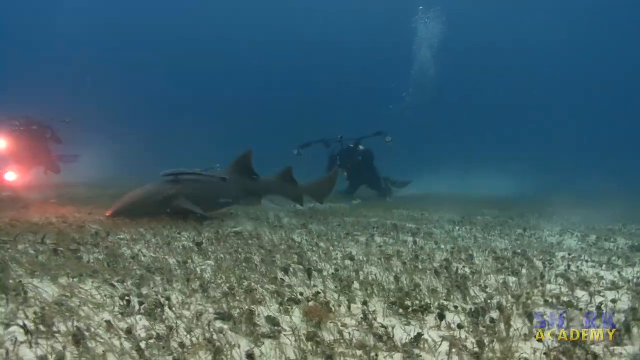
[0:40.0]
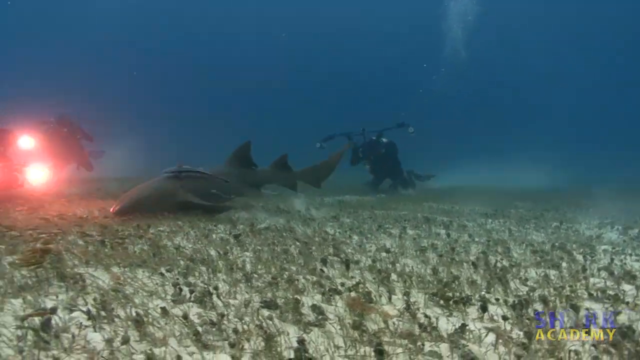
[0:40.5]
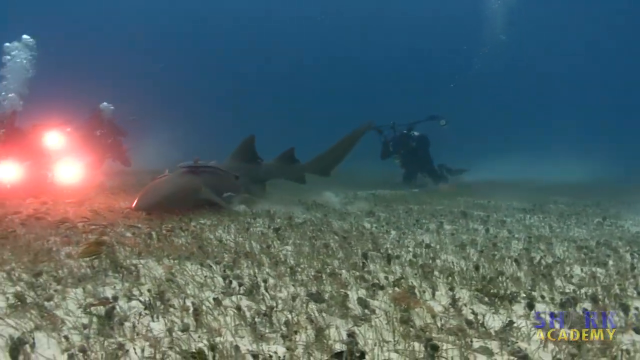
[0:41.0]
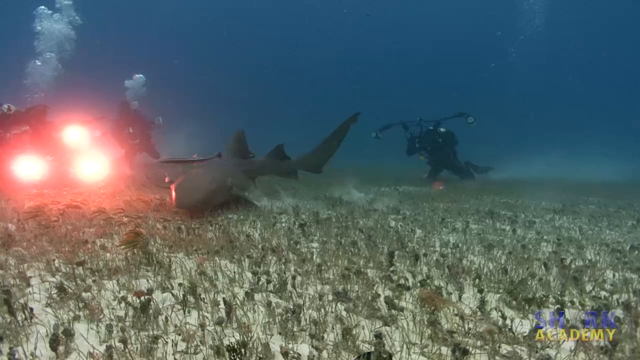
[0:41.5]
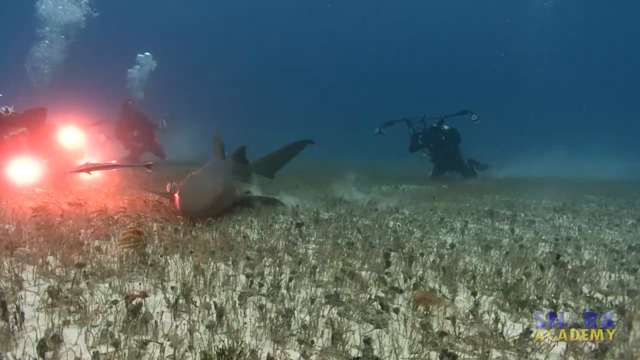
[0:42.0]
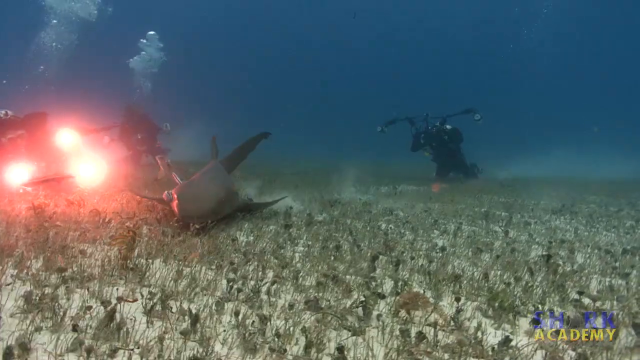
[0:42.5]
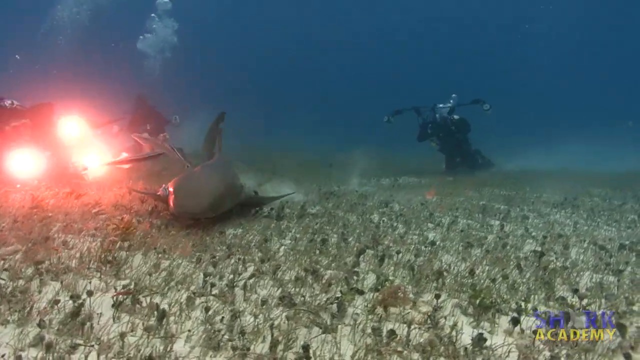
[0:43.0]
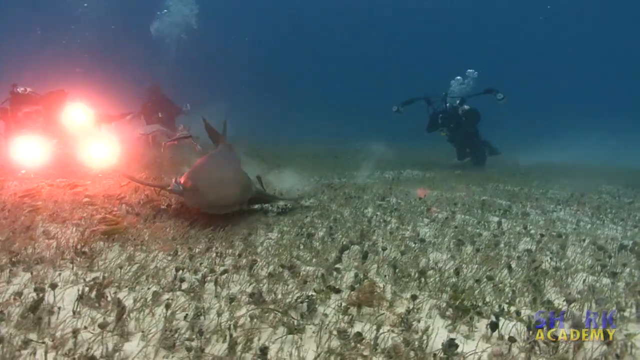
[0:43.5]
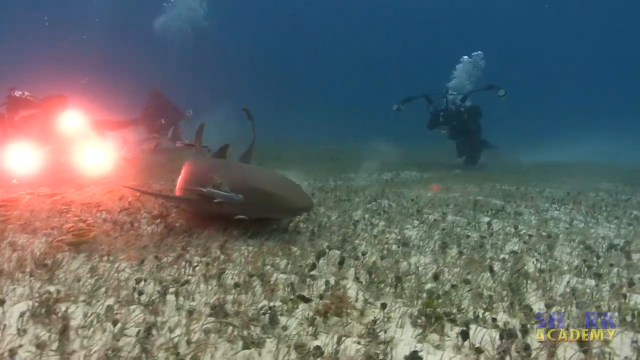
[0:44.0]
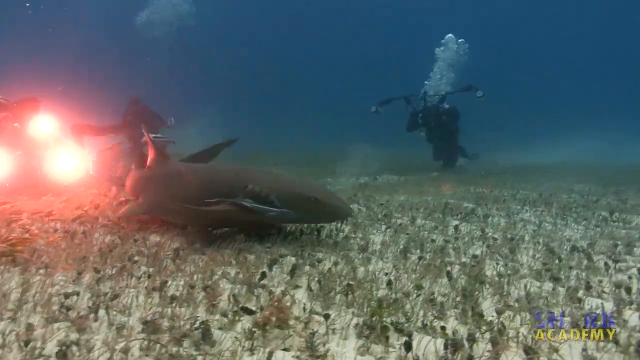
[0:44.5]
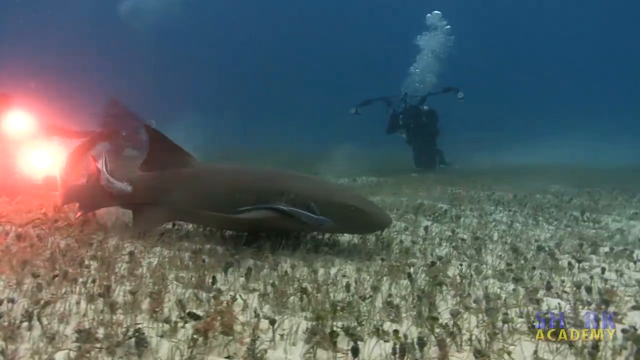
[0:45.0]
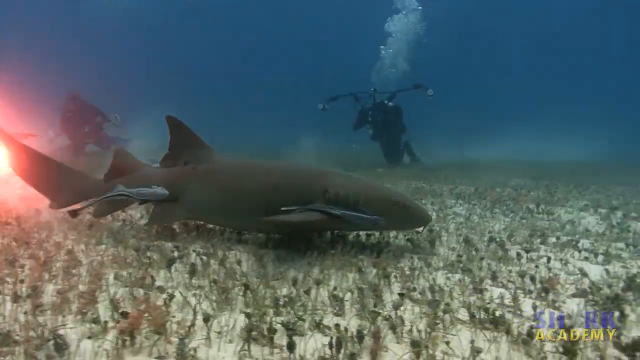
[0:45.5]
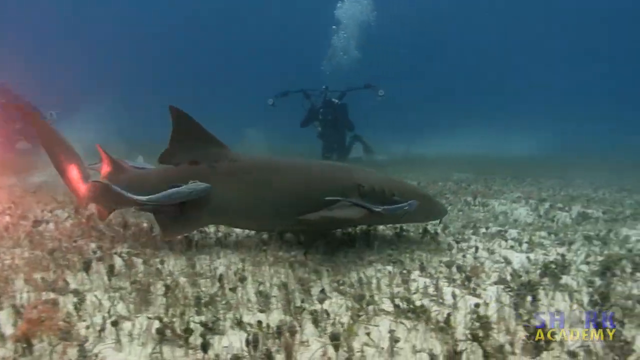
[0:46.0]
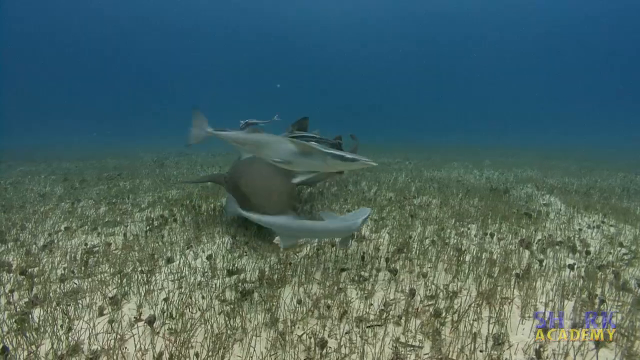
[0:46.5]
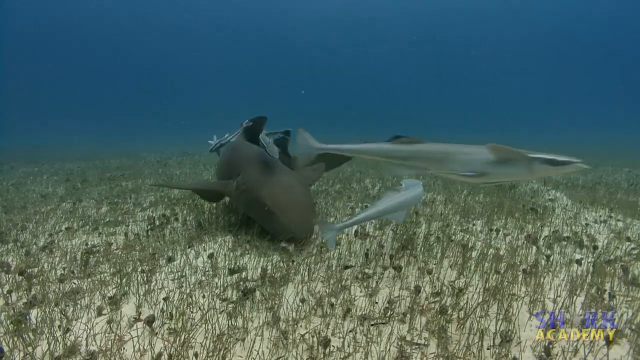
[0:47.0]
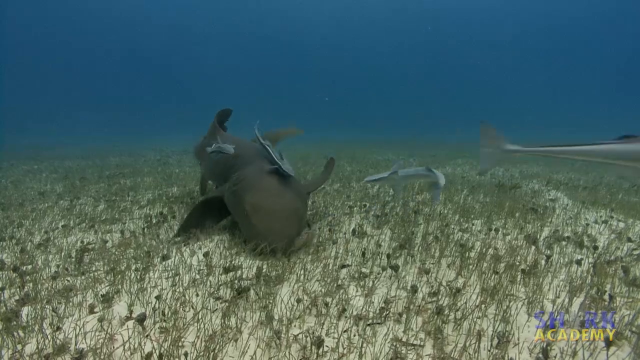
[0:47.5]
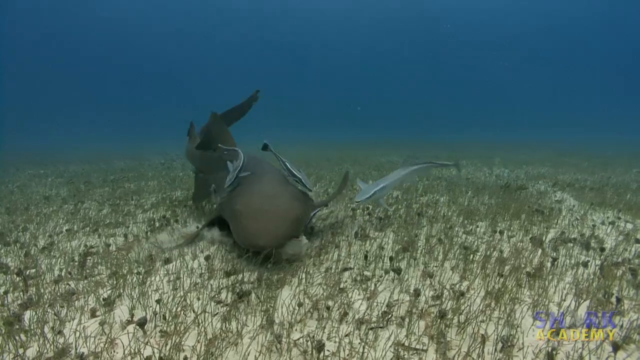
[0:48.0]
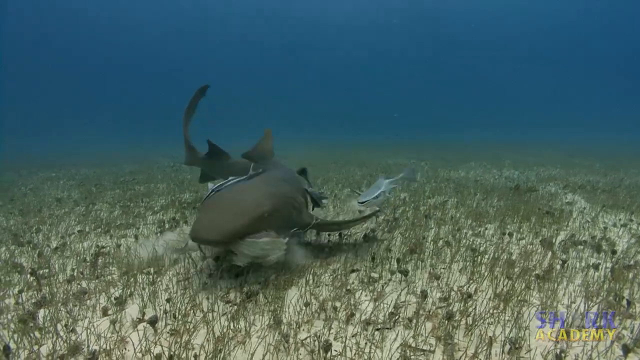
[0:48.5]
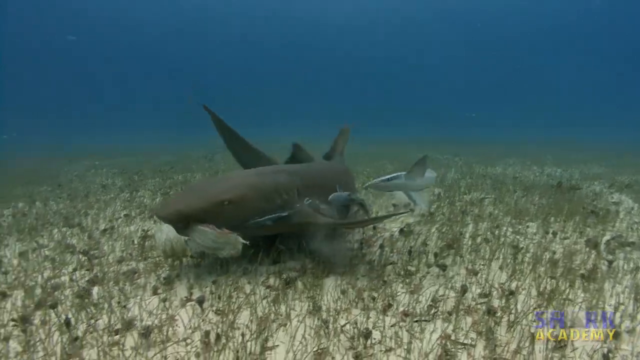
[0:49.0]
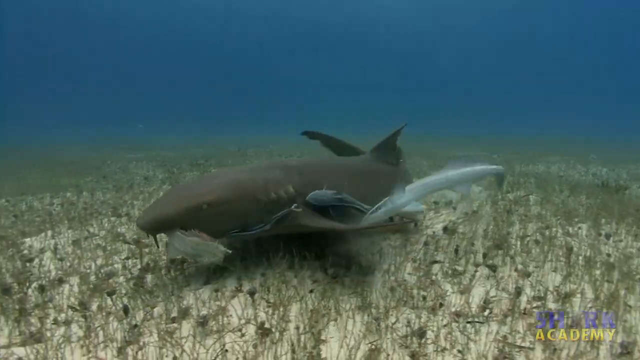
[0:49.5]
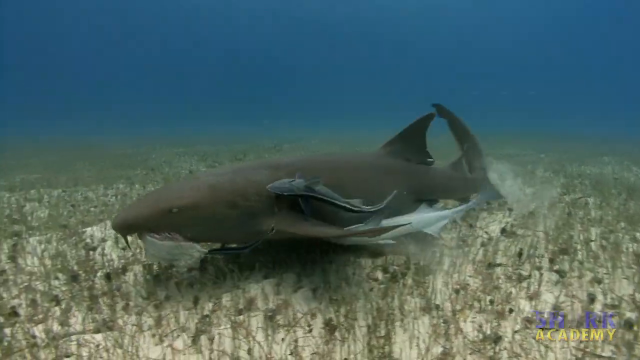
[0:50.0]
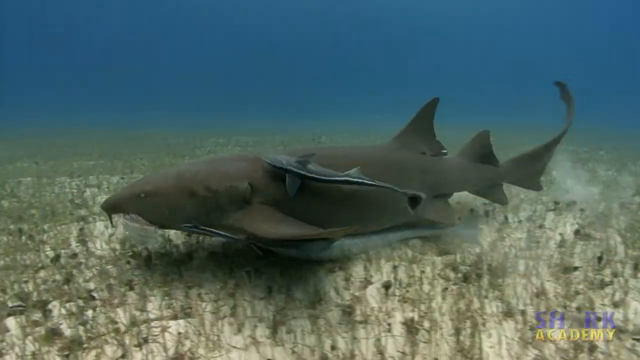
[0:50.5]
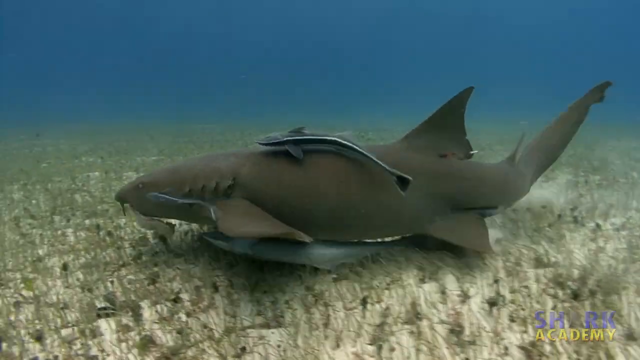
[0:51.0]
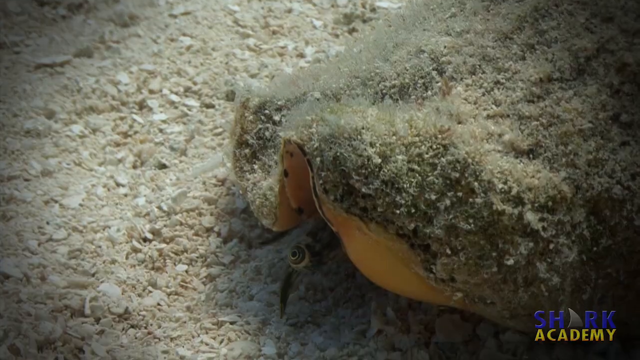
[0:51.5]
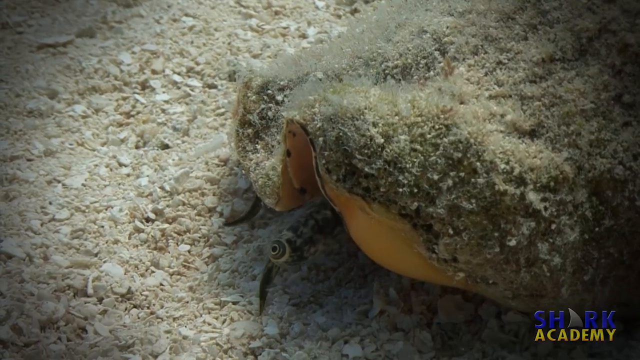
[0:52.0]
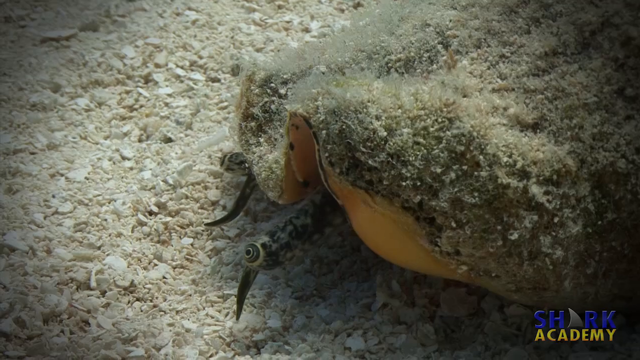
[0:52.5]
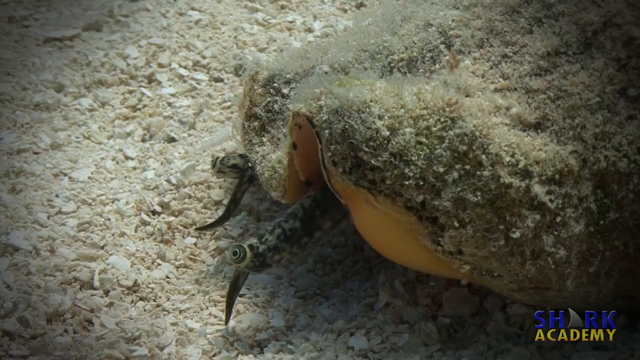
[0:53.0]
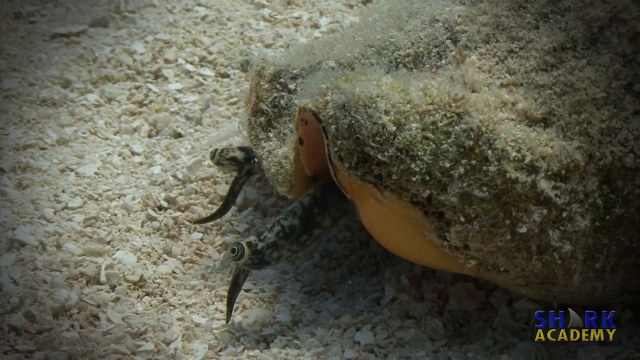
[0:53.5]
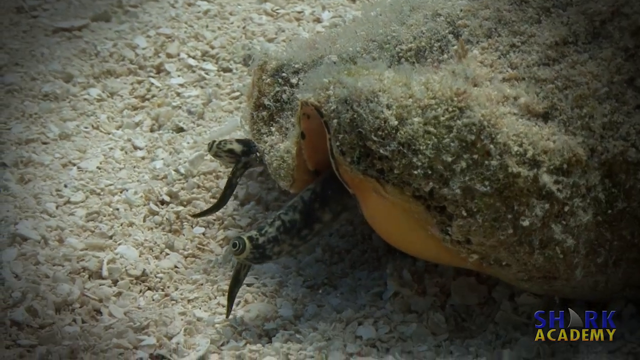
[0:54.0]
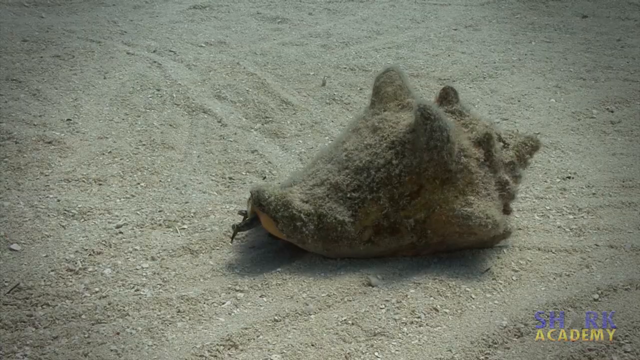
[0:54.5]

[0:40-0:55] The big shark, apparently a nurse shark, keeps swimming near the bottom of the sea while one man continues recording. What looked like large recording equipment appears to be three giant lights shining on the shark. Smaller fish surround the shark, swimming right beside it, on top of it and around it, and they don't seem to bother it. The shark grabs a fish from the bottom and keeps swimming with the fish hanging out of its mouth. Then a snail appears whose shell looks covered in moss, with two very large eyes poking out, and it starts to move.